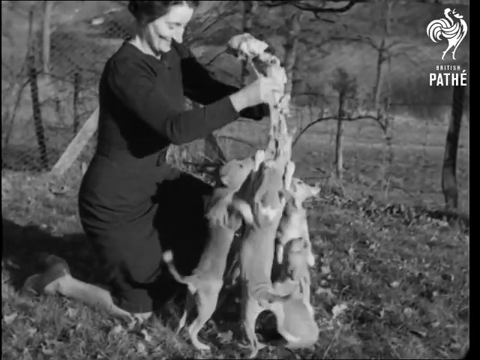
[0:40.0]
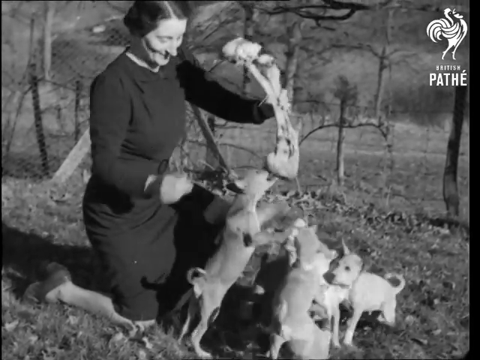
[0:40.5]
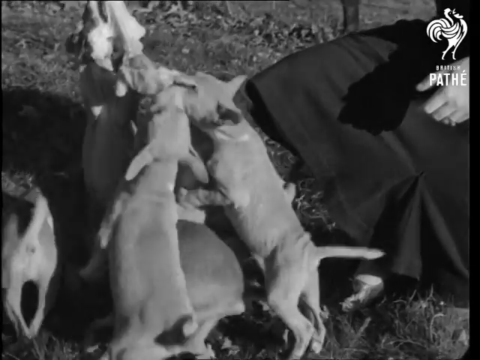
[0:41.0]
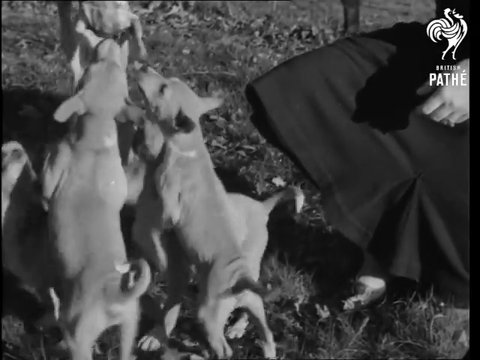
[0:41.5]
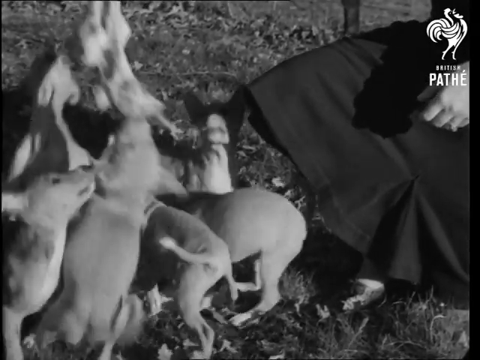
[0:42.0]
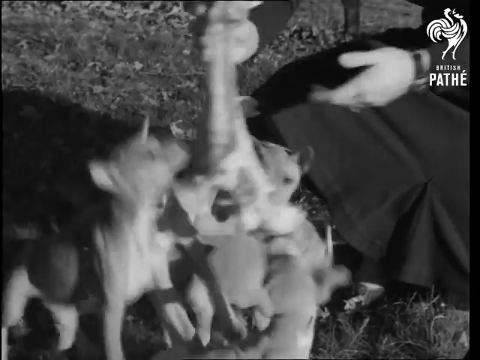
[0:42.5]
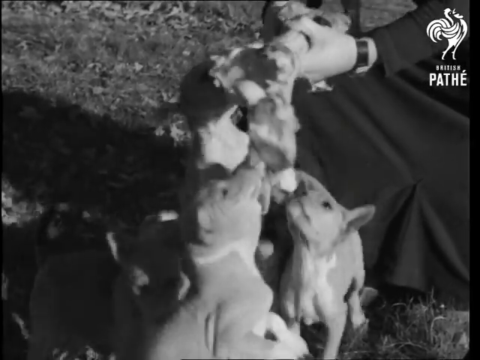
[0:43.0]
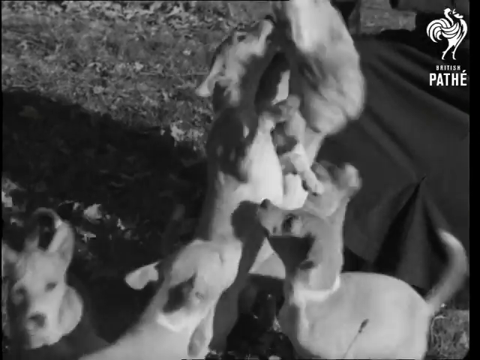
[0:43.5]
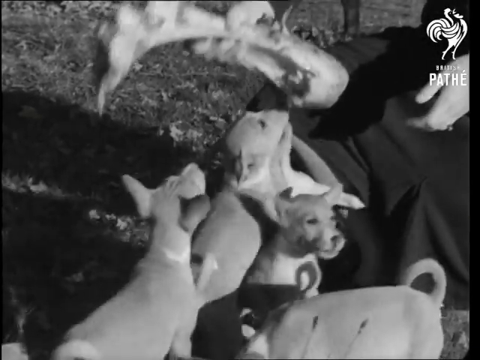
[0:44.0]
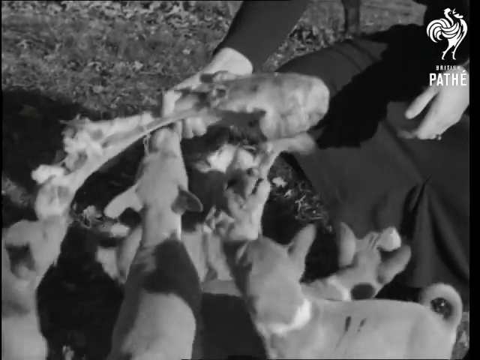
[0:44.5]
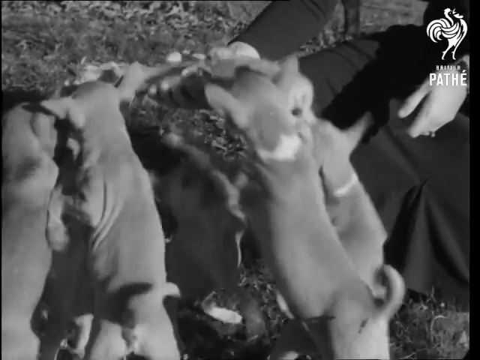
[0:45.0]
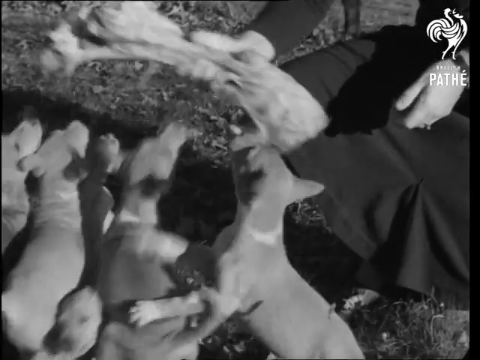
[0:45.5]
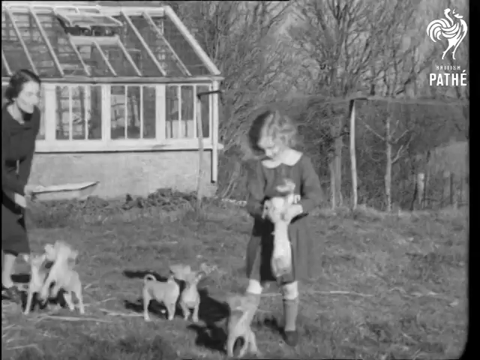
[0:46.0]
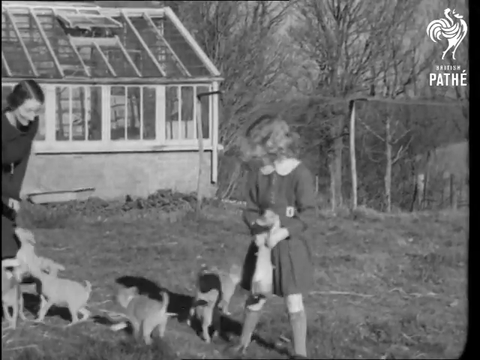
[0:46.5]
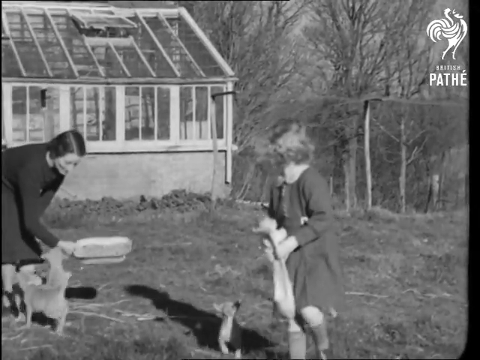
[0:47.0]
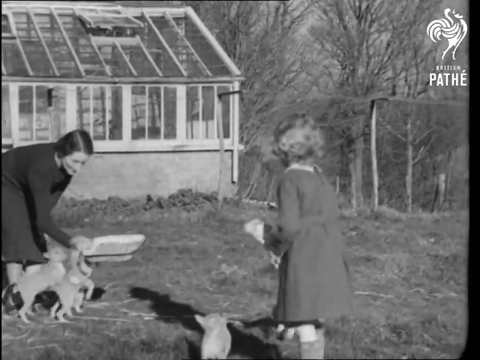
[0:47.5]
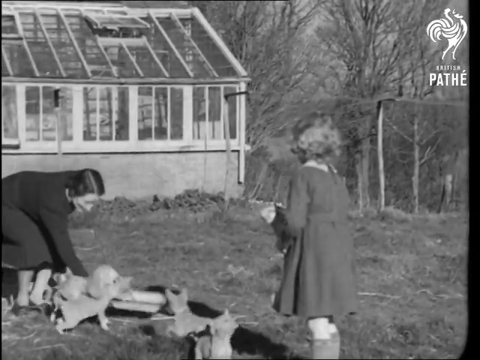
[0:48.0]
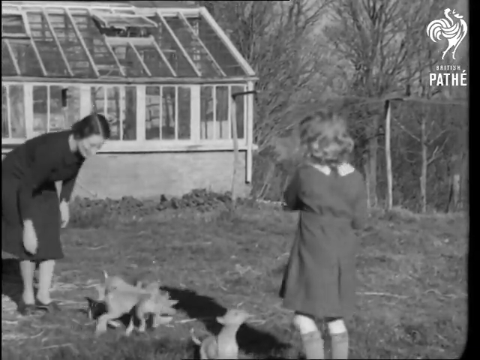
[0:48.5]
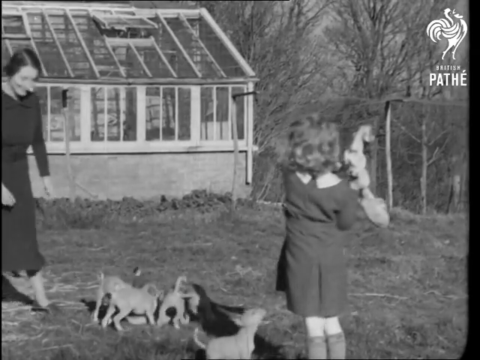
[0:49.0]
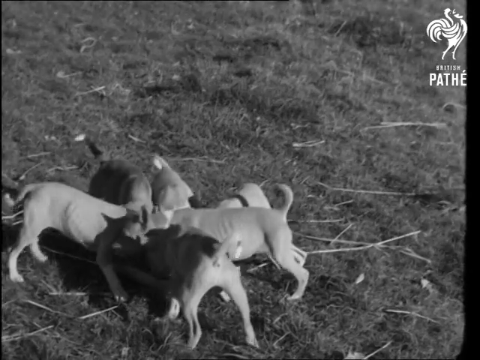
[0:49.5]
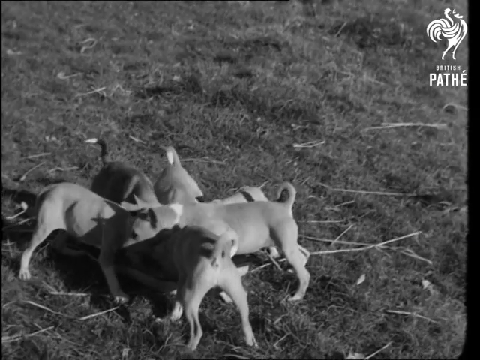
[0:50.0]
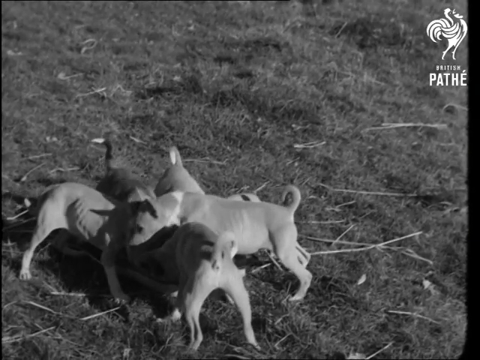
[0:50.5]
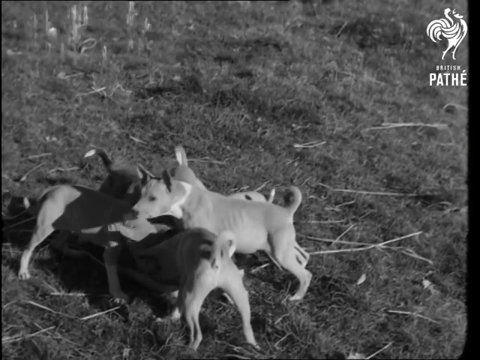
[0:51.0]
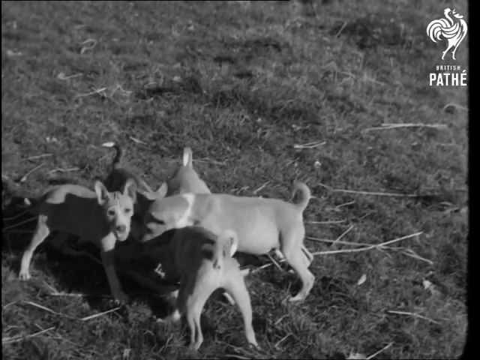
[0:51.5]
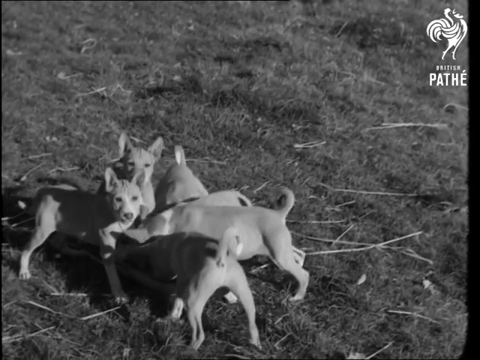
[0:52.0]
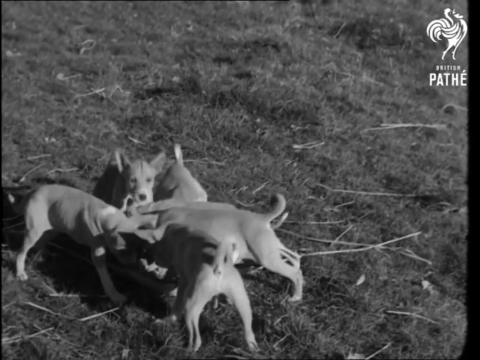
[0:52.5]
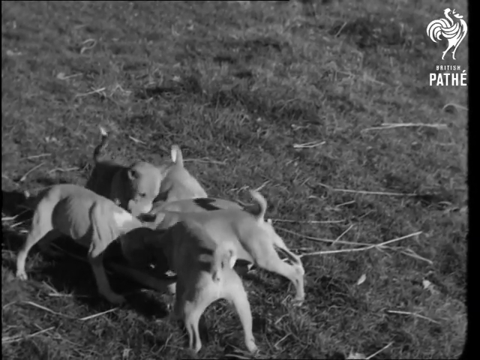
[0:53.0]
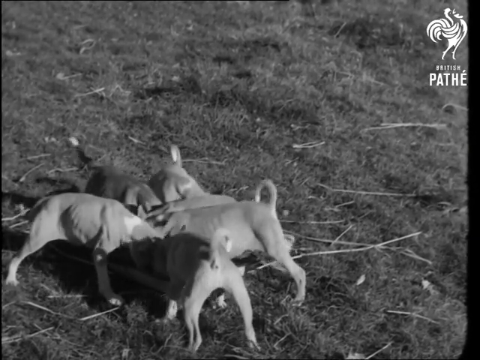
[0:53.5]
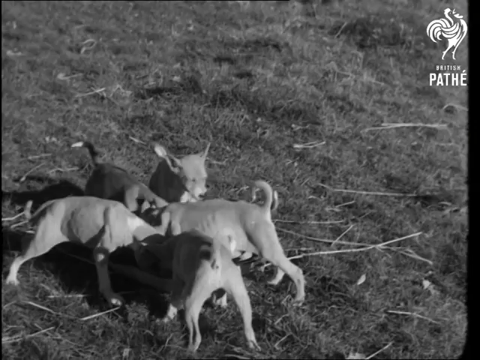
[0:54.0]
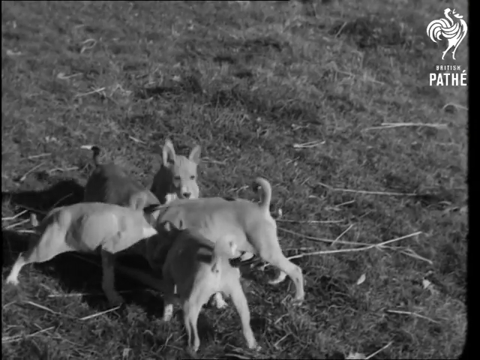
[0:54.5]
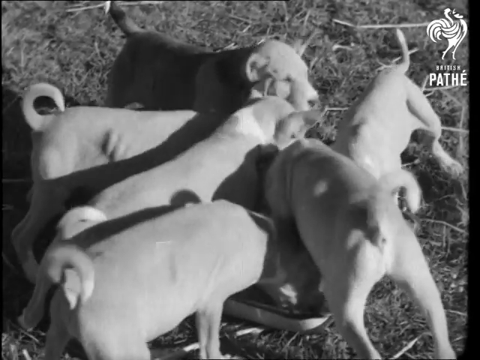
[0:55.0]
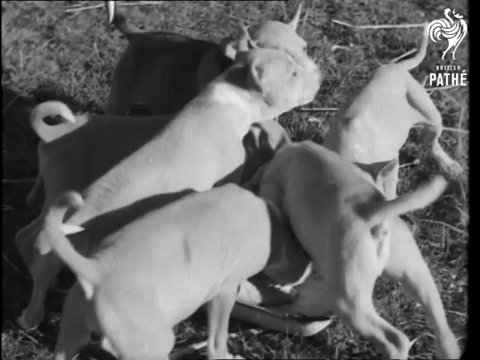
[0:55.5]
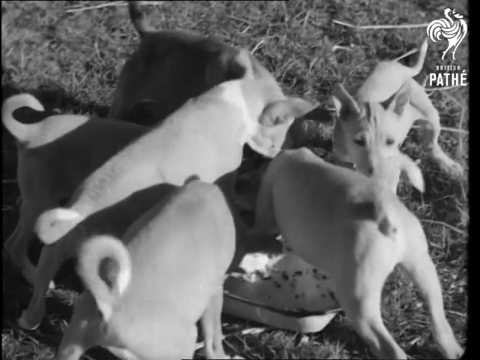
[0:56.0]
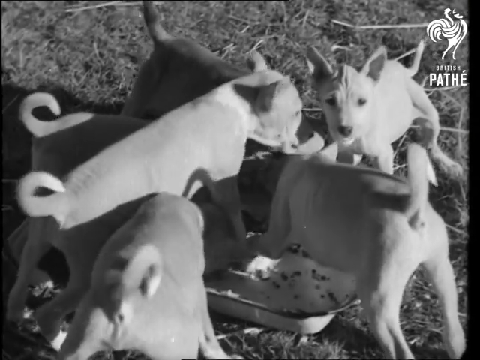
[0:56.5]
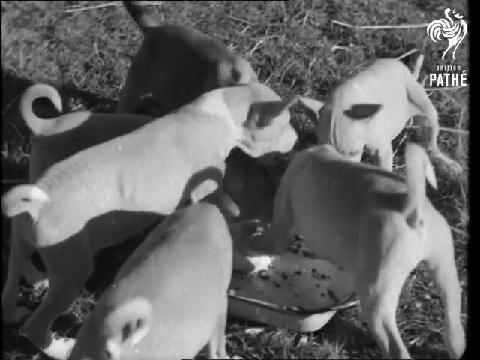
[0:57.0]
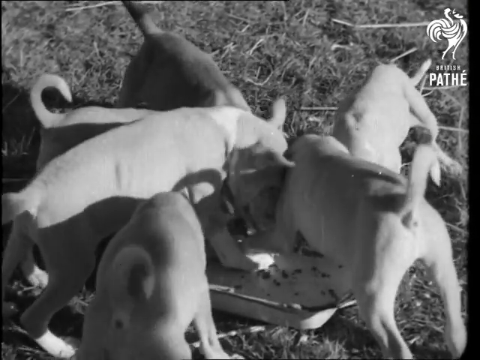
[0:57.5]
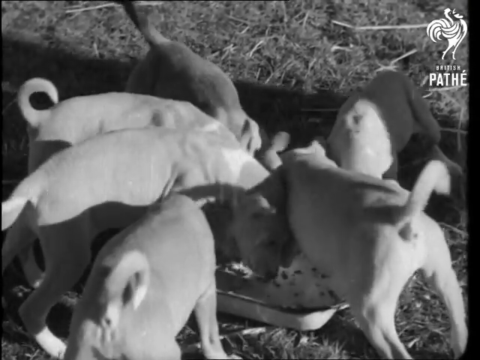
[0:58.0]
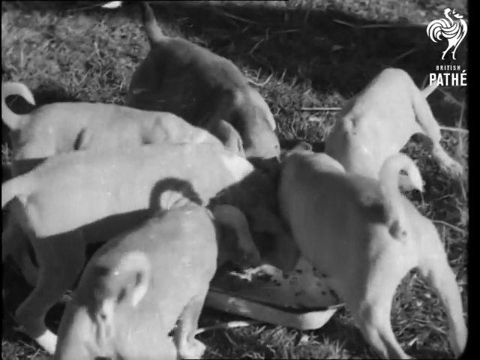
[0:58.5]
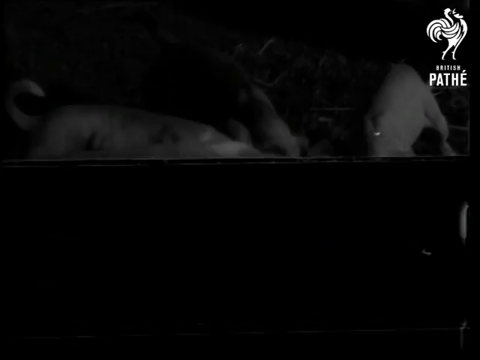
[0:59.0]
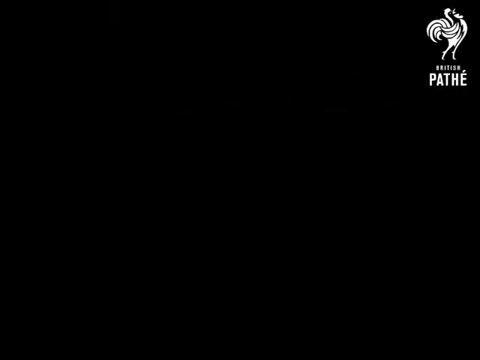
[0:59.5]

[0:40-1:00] A woman holds on to a giant bone while four or five puppies underneath jump up trying to grab it with their mouths. Eventually one of them grabs hold of it and pulls it down, but the woman pulls it back up. The video cuts to a little girl holding the bone while the woman holds what looks like a carton full of food, and all the puppies go toward it. About five or six of them eat from the tray the woman put down, which appears kind of white with a few black spots. The puppies all seem to be the same color, though the image is black and white so the actual color cannot be told. A white logo is in the top right, and text at the bottom spells out "PATHE".